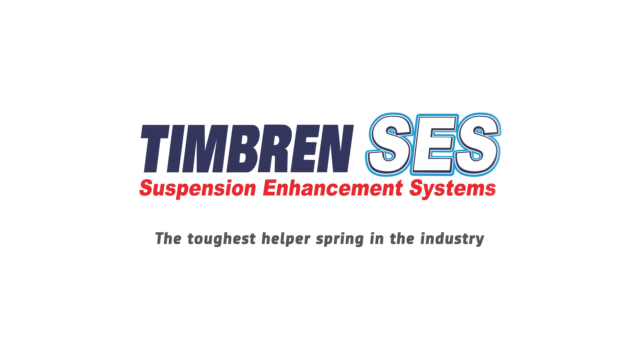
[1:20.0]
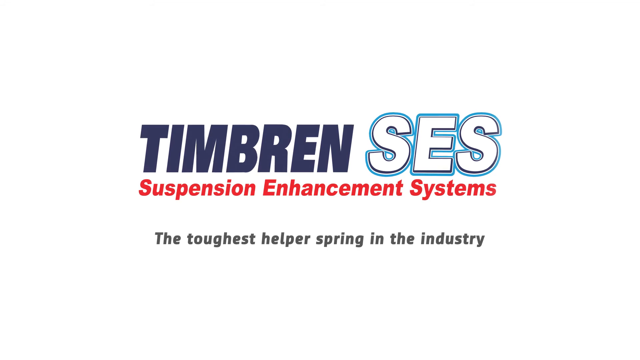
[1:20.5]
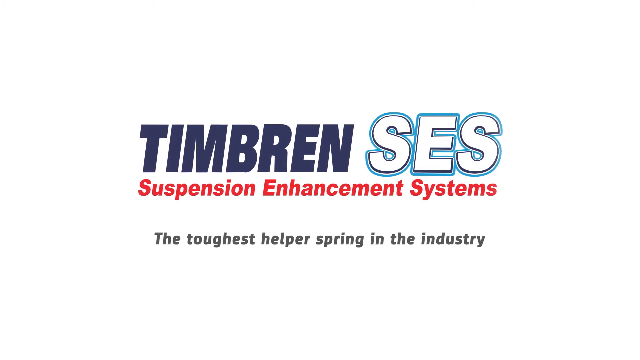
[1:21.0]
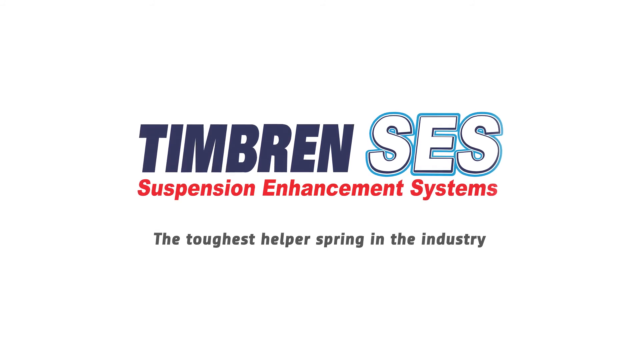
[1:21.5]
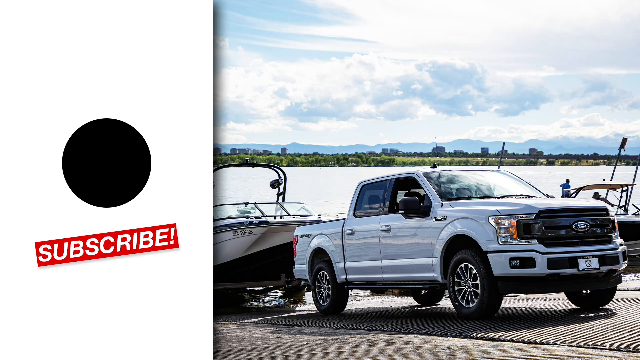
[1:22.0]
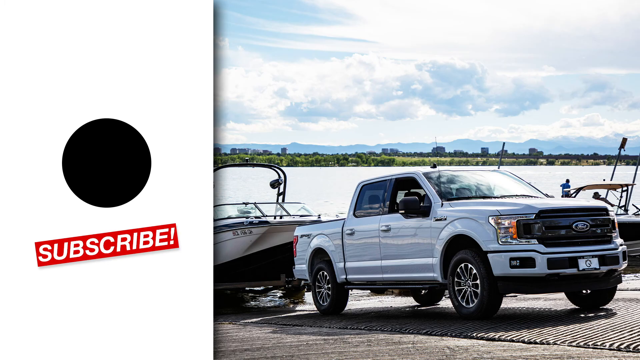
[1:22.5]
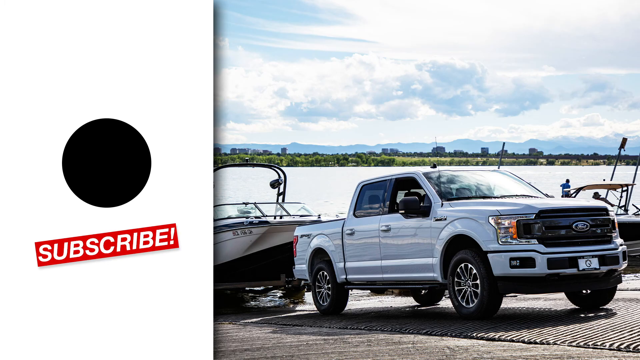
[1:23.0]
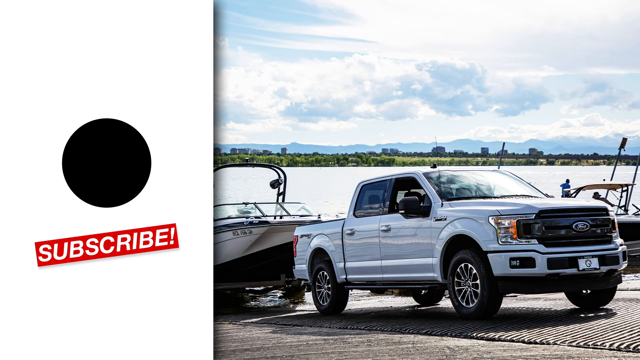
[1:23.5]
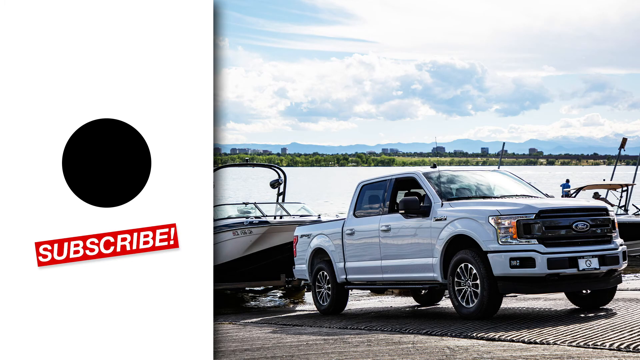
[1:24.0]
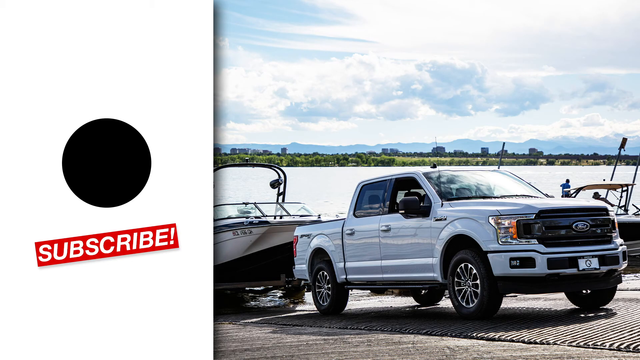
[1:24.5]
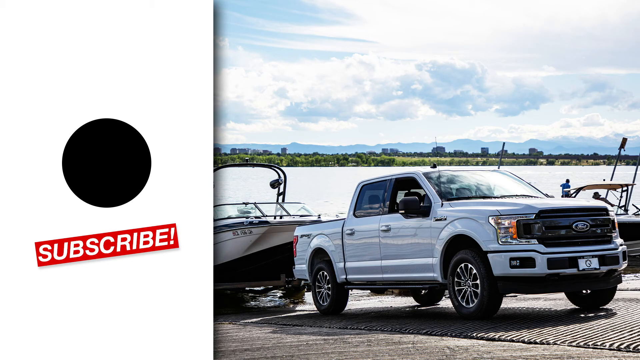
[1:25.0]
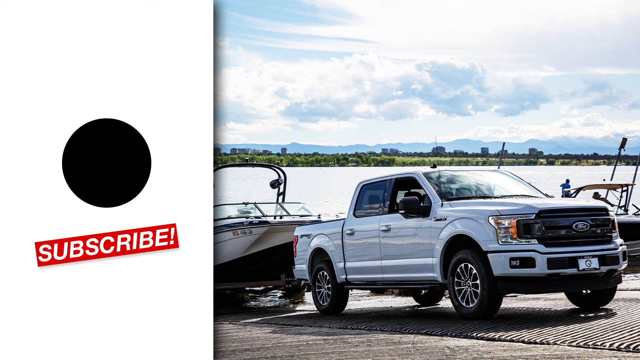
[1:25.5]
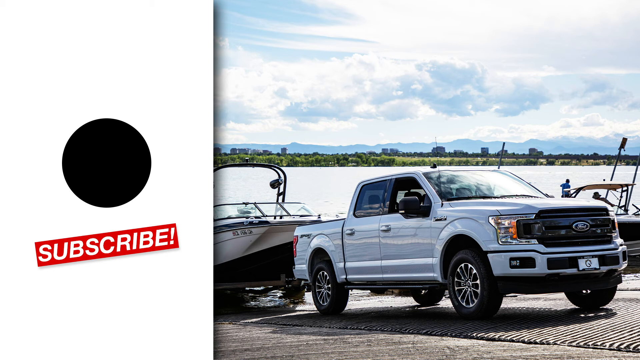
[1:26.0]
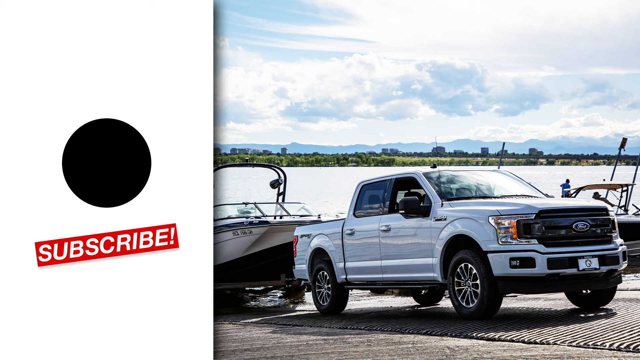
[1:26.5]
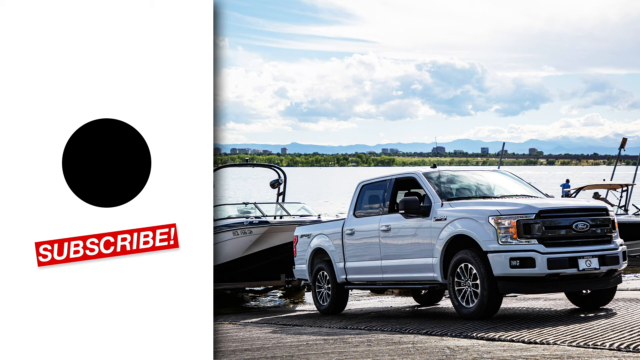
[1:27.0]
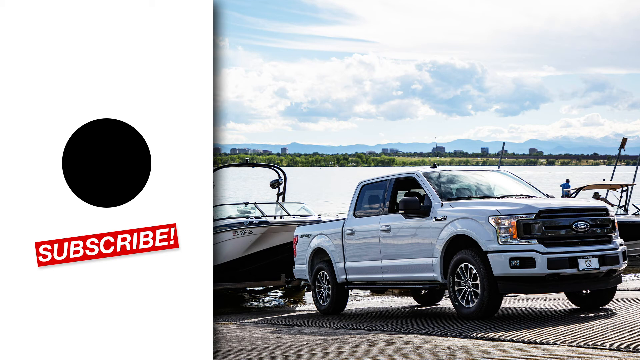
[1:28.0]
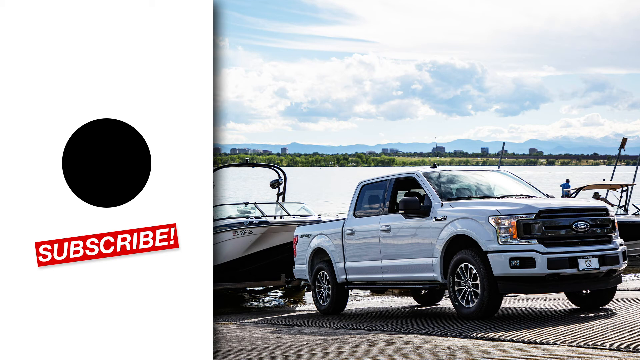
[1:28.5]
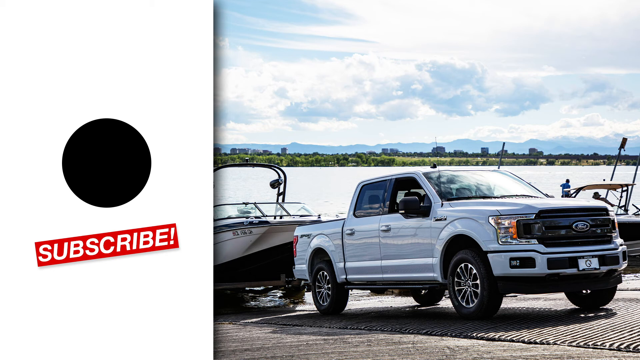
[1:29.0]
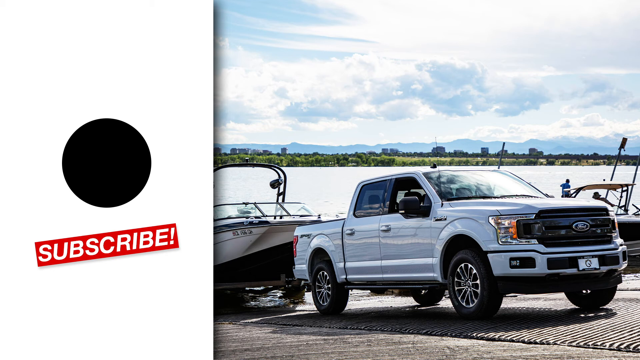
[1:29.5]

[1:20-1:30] The text reading "Timbrin SES Suspension Enhancement Systems the toughest helper spring in the industry" is still on screen. It is replaced by a picture of a white Ford pickup truck pulling a boat, with a big open lake behind the boat. The truck's grill faces toward the right, and the truck is slightly sloped upward toward the right. On the left side of the screen there is a white section with a big black dot in the middle, and underneath it a red badge with white text reading "SUBSCRIBE" in all capital letters. The truck's passenger side window is open; only the passenger side is shown. Behind it on the right is another boat with somebody standing up inside it. Beyond that is the side of the river, with a bank full of green grass on the other side, blue mountains in the background, and a cloudy sky above.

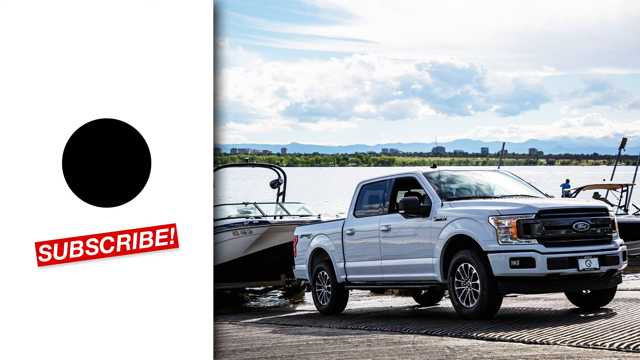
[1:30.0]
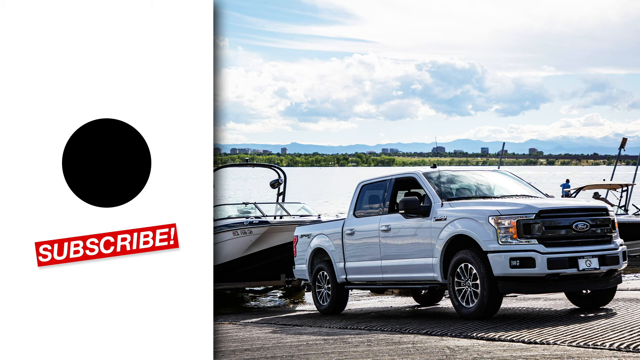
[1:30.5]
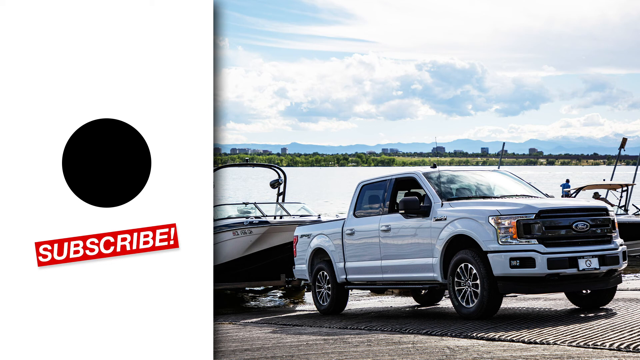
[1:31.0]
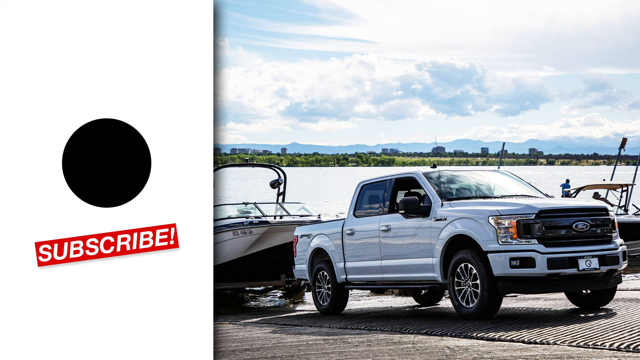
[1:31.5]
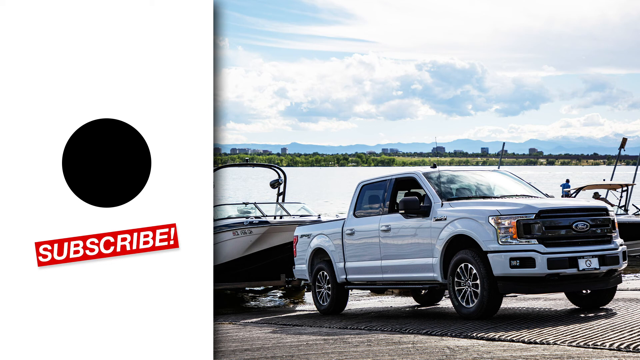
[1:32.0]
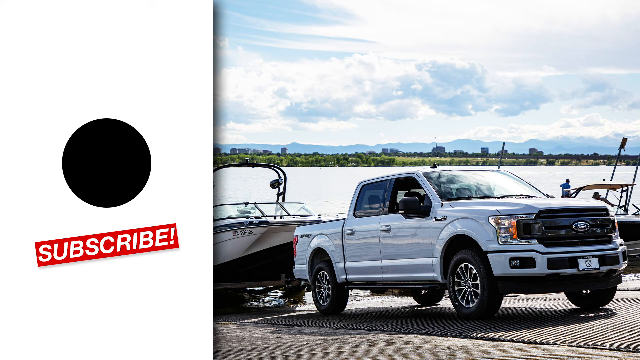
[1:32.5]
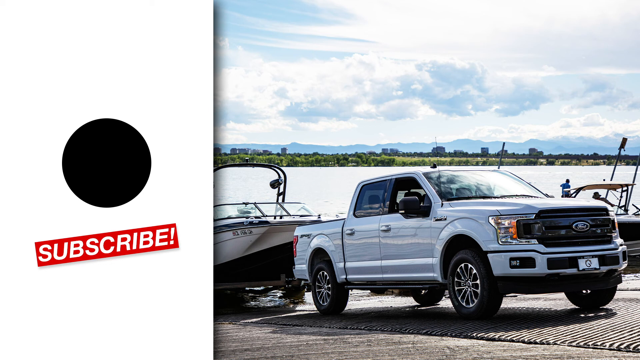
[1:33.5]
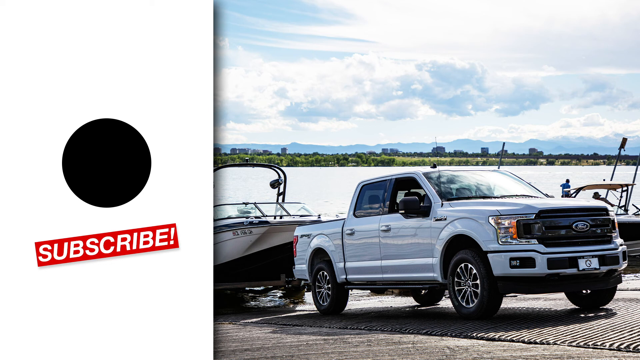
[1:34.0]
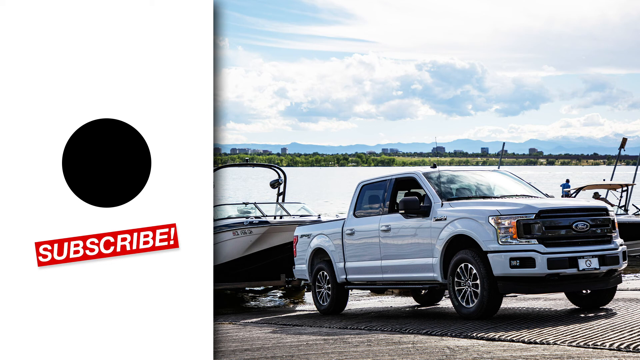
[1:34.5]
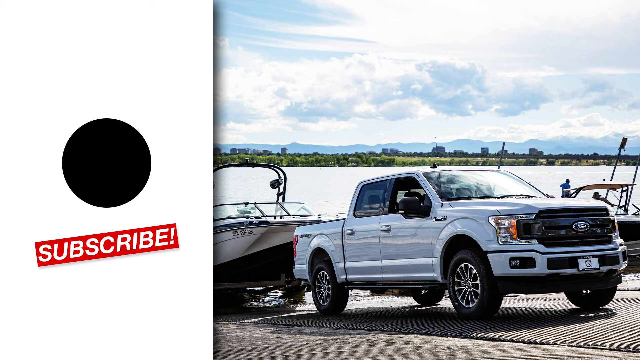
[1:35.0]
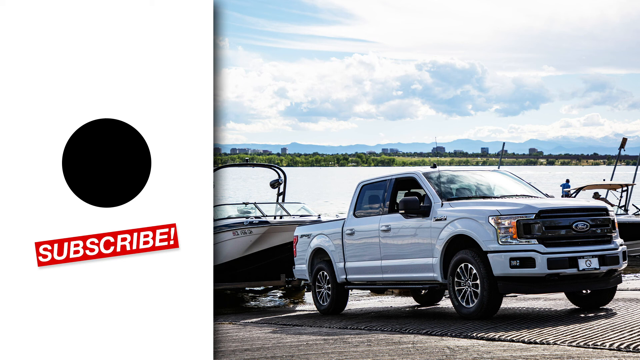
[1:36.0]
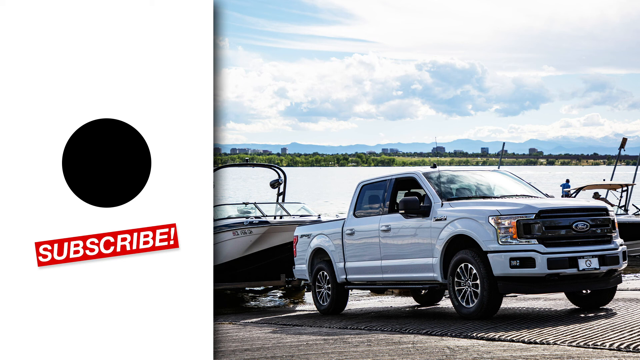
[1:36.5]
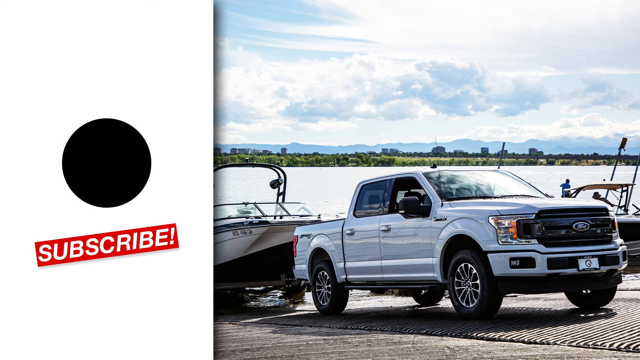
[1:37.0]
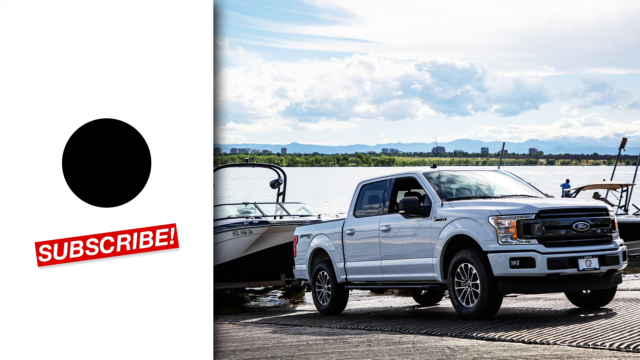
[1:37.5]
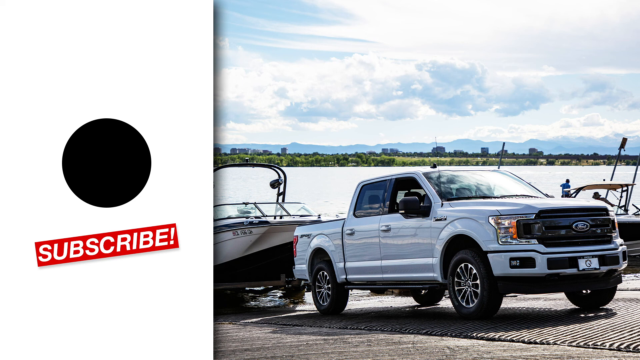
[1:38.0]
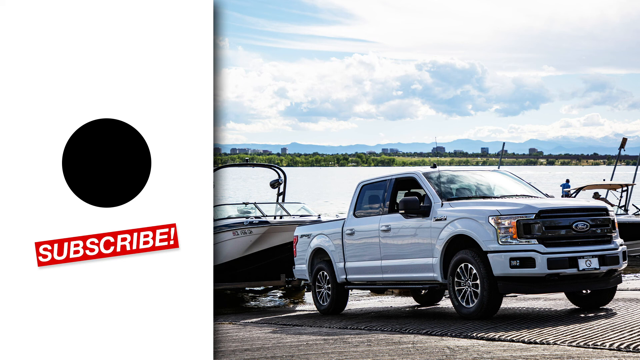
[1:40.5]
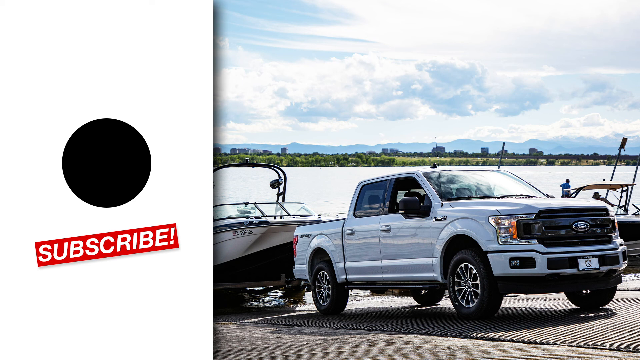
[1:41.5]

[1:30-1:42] The picture shows the white Ford F-150 crew cab pickup truck, very shiny and clean, in pristine condition. A white license plate on the front has a black emblem inside, too small to make out. The truck has chrome-colored rims with lines and black spacing between the lines. Behind it, only part of the boat attached to the truck is visible, partially submerged in the lake. The boat is dark blue on the bottom and more white above, with some blue lines, and above that a black bracket runs across the top in a kind of upside-down U shape.